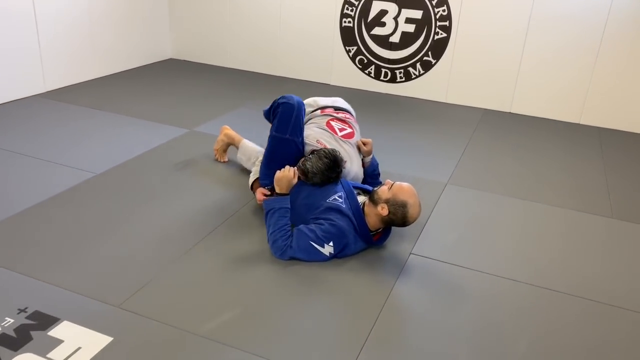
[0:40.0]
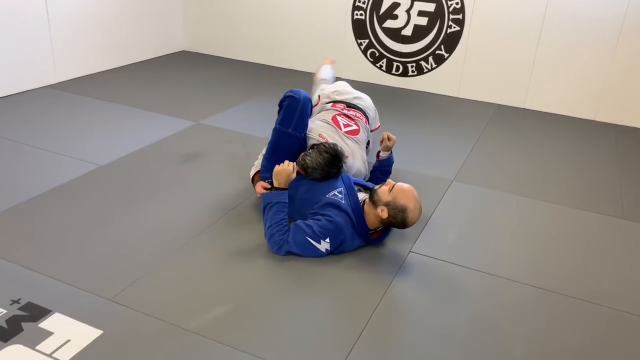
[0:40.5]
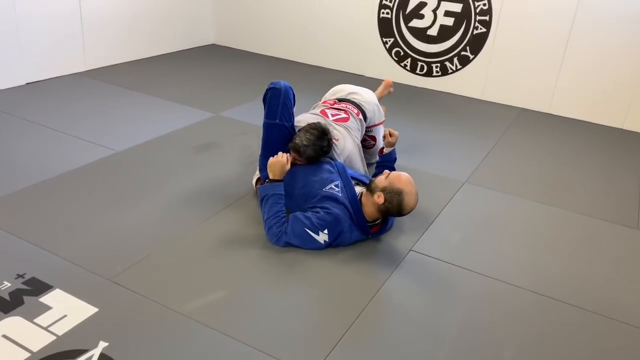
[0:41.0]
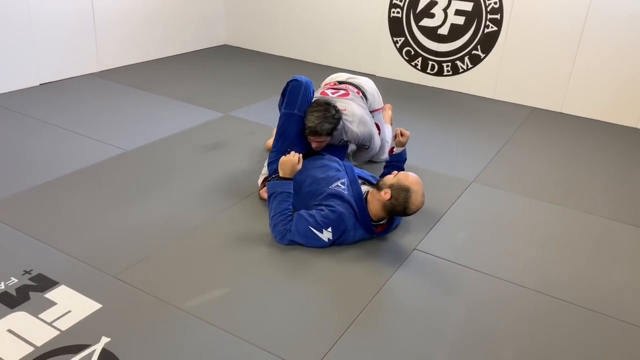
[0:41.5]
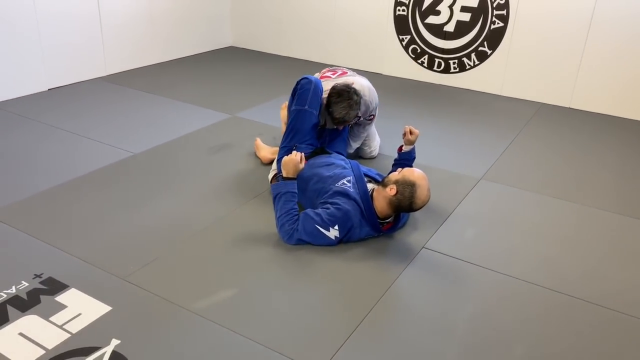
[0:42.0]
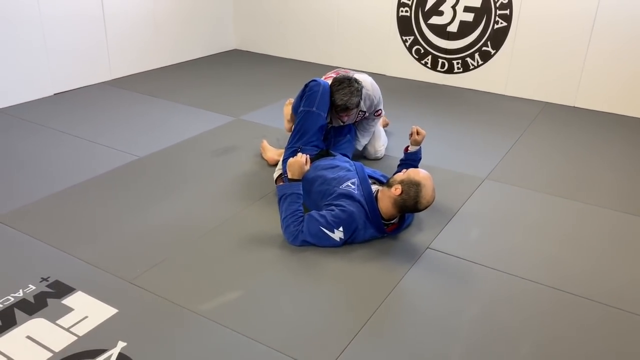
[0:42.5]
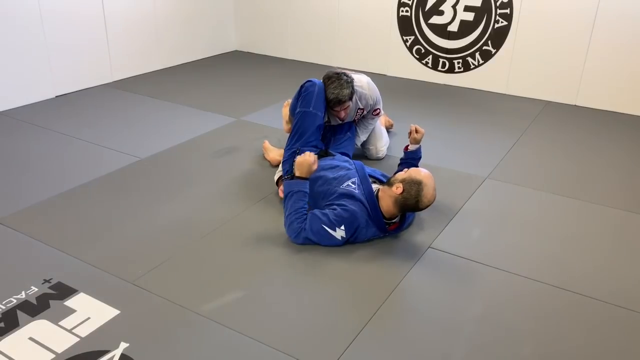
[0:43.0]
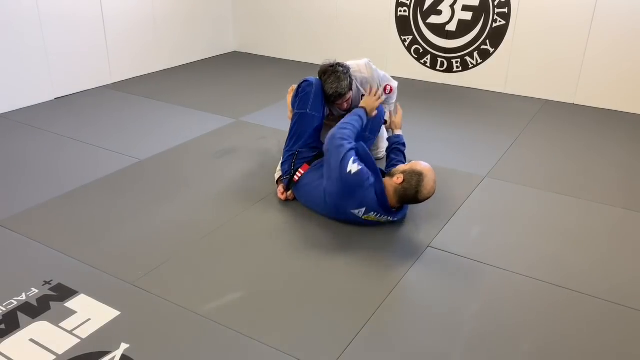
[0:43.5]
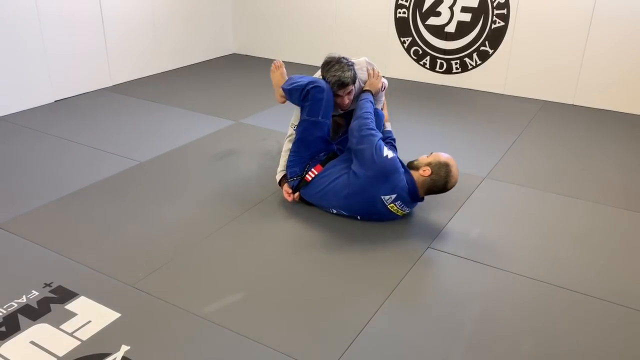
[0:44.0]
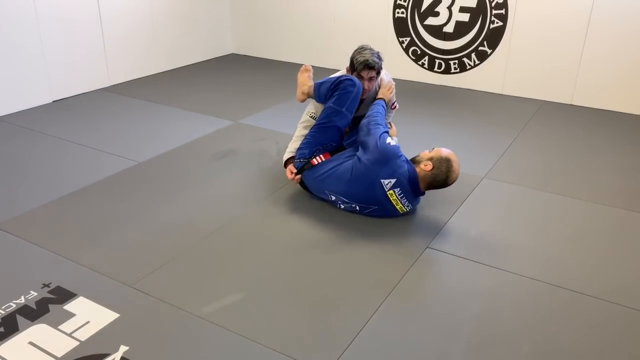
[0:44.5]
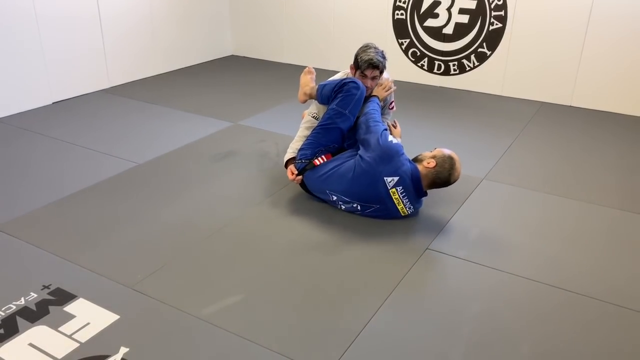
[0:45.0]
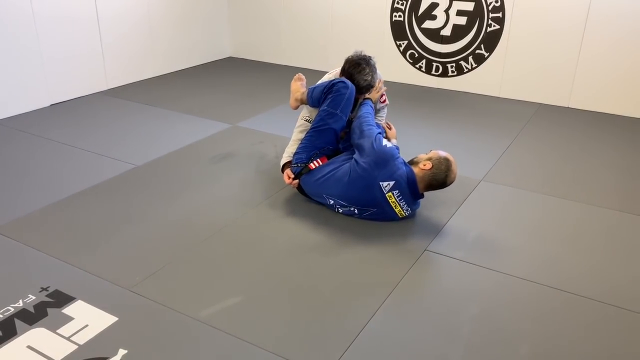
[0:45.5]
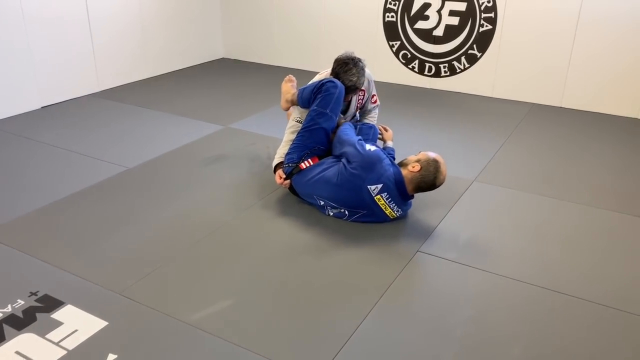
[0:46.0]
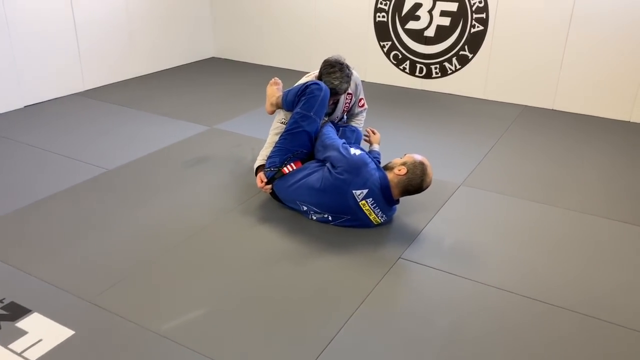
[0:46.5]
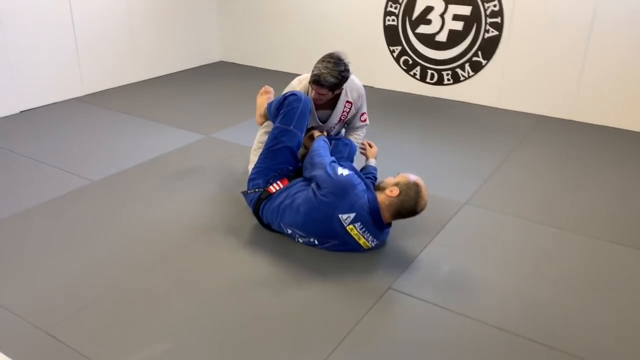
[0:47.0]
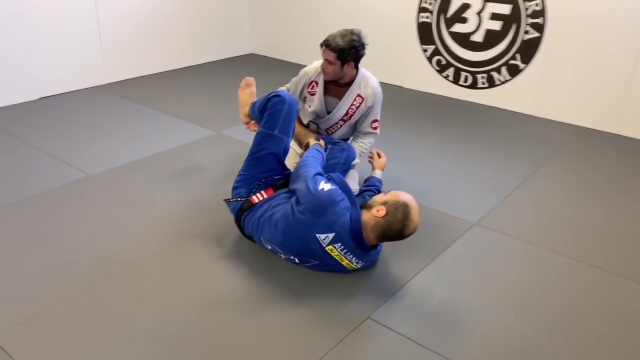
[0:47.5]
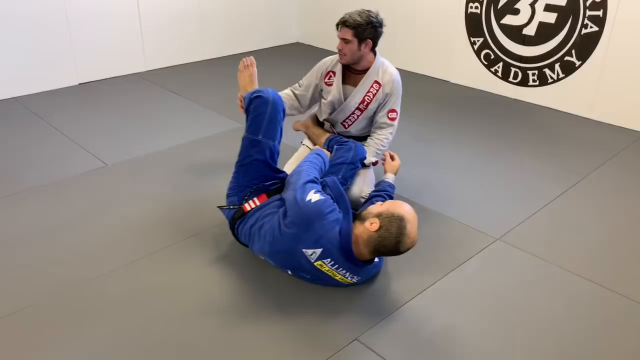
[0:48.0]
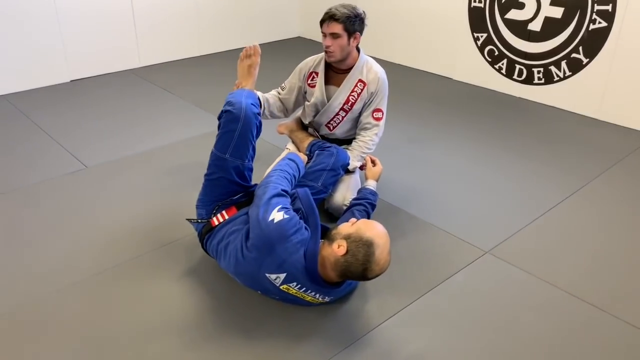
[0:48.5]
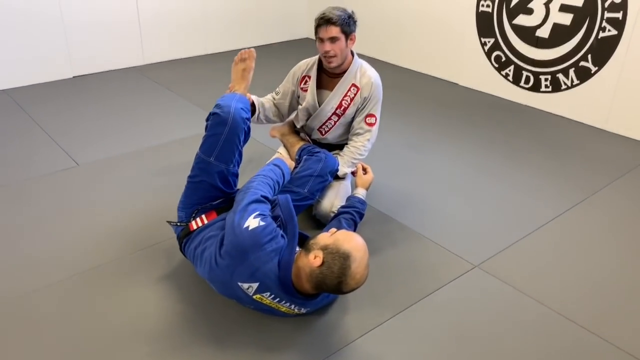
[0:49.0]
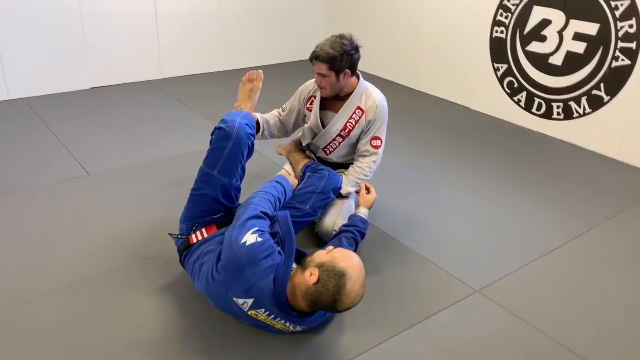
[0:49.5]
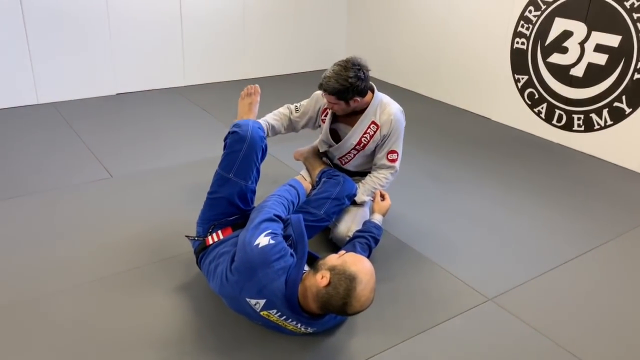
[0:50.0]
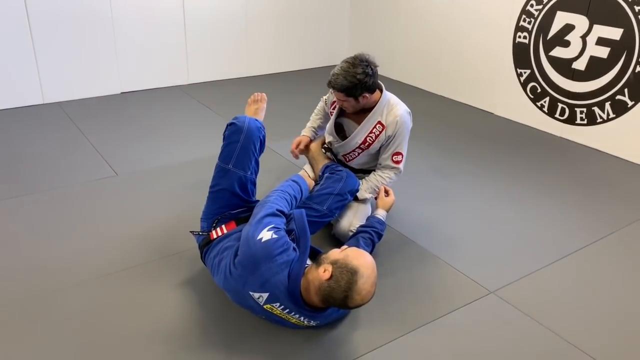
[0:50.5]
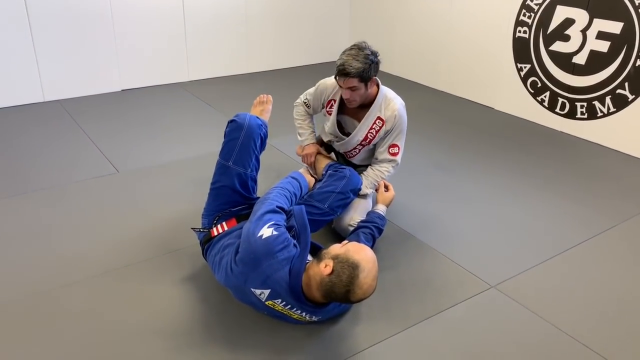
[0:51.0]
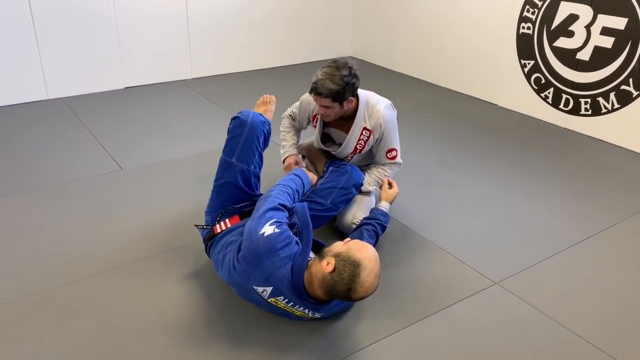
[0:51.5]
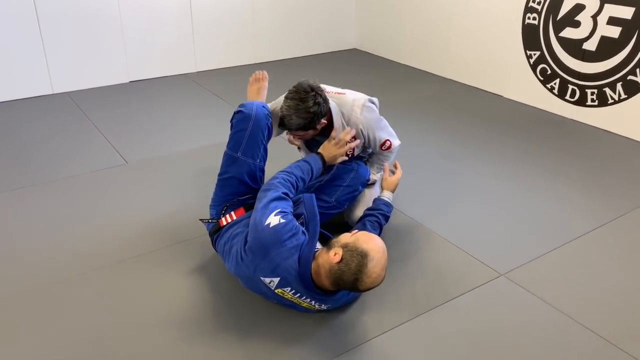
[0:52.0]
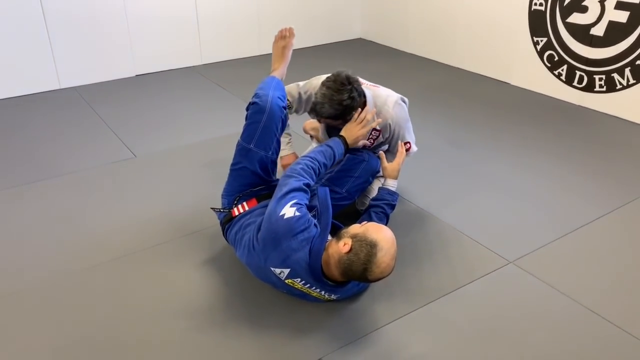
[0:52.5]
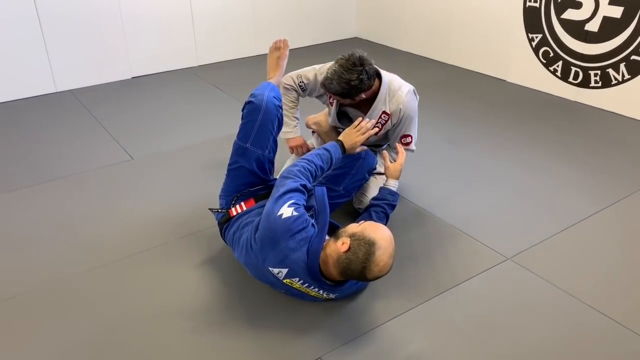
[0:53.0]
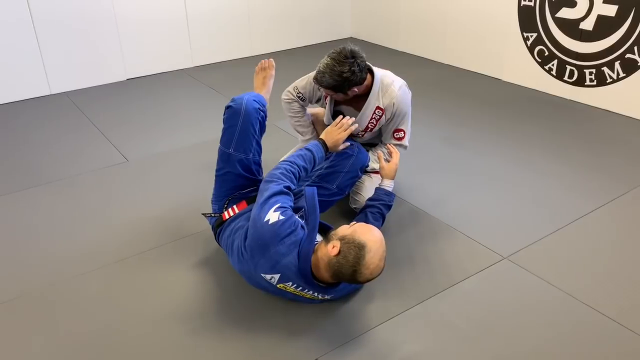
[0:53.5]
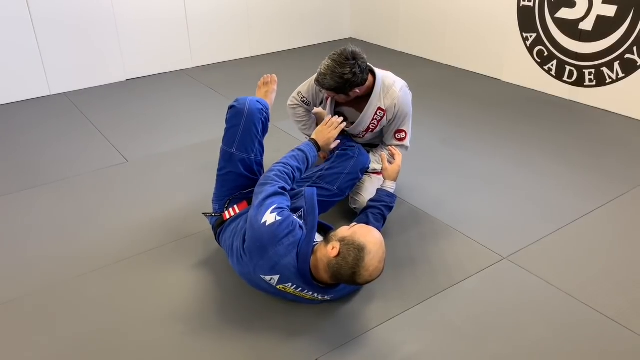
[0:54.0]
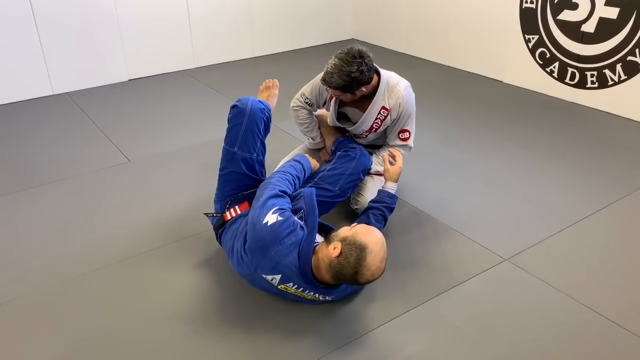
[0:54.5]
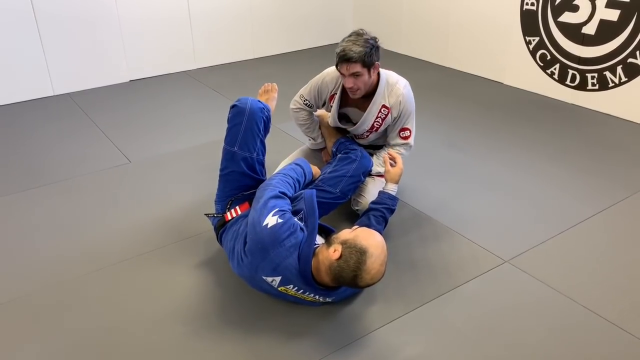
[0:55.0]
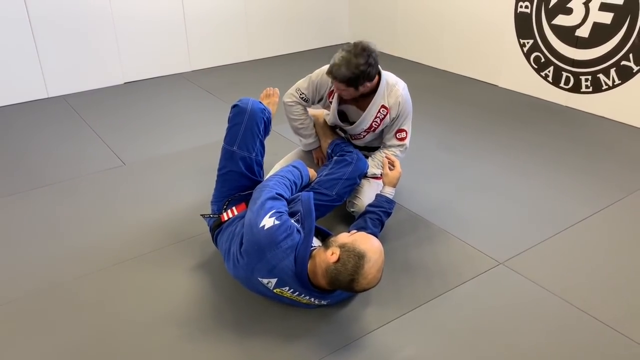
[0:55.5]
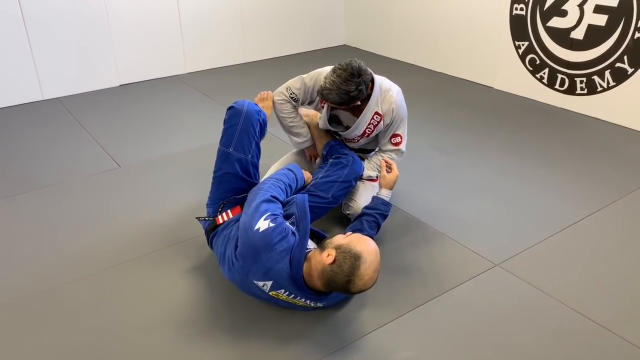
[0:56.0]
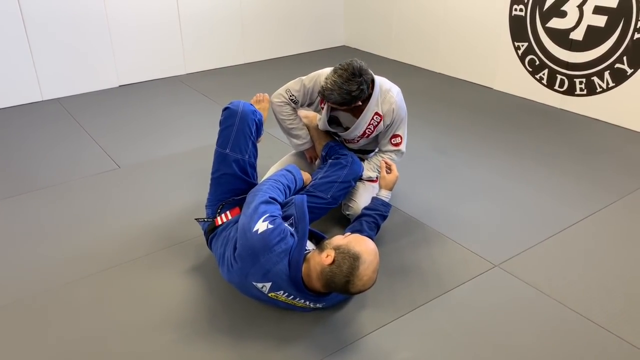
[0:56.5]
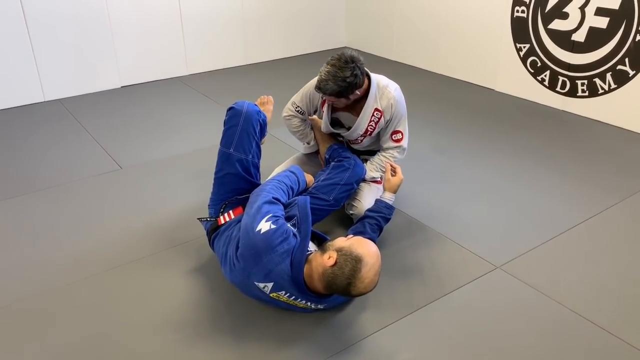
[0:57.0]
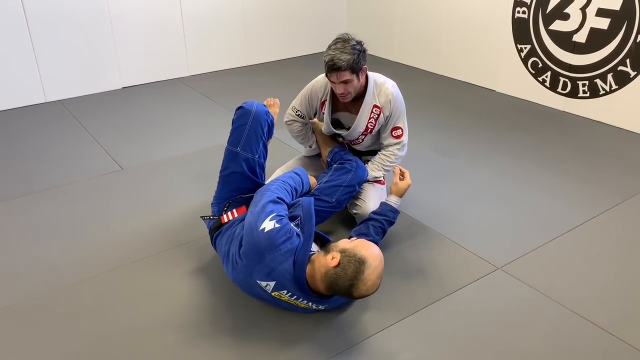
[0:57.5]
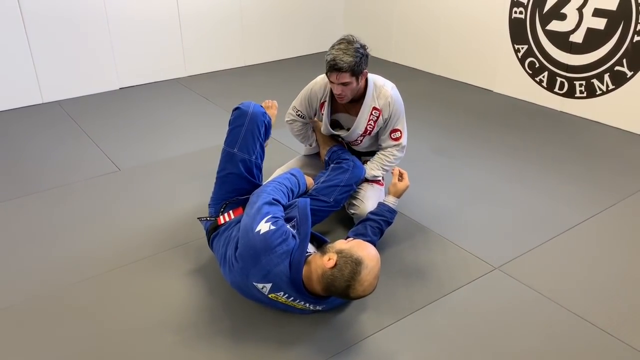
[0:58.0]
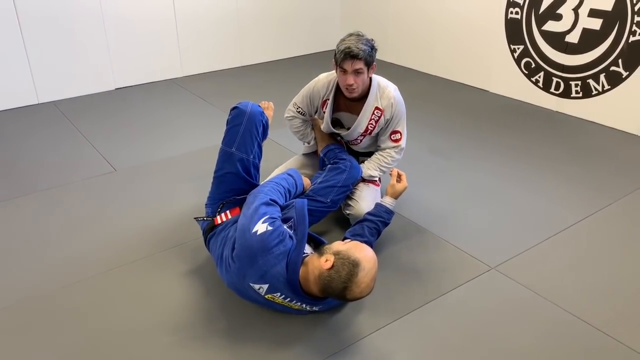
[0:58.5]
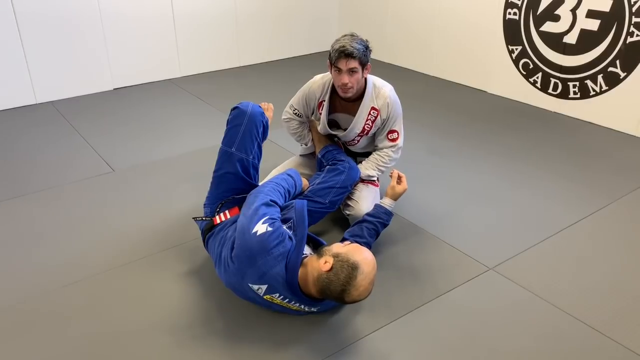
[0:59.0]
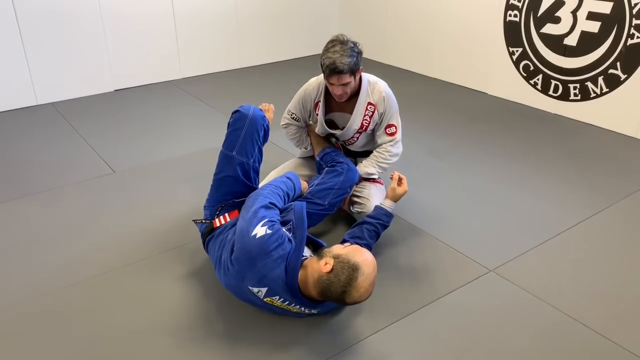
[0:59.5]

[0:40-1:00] The two are on the ground. The man in blue is on his back and lifts his neck so that his head is off the gray mat. The other man holds onto one of his legs. He touches the bottom of the man in blue's left foot and shakes it a little while talking, then touches the other foot, apparently indicating where to put it. He wraps his right arm around the right calf of the man in blue, talking as he does so, and kind of secures it in his arm.